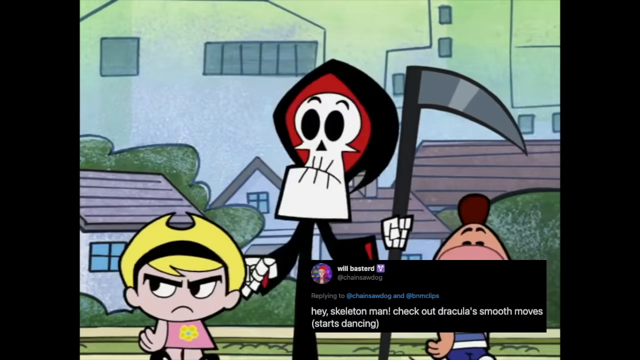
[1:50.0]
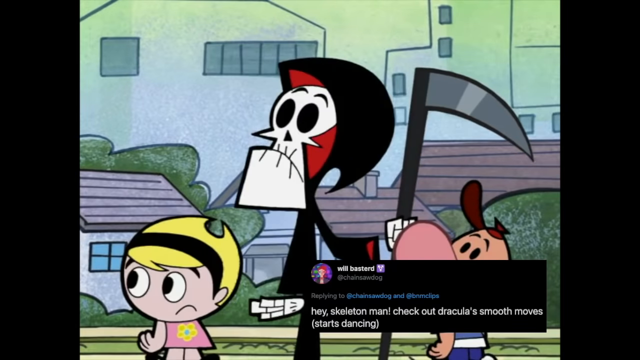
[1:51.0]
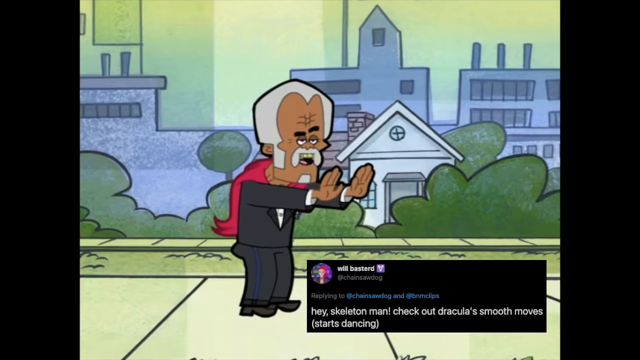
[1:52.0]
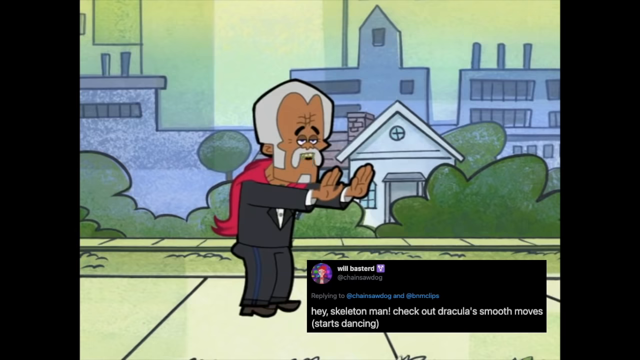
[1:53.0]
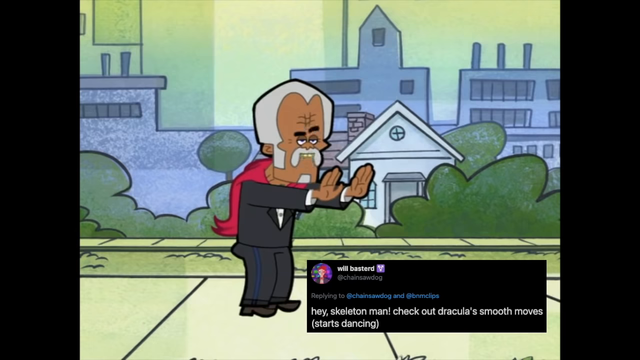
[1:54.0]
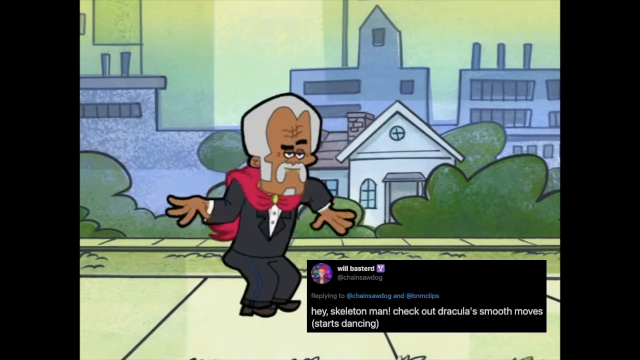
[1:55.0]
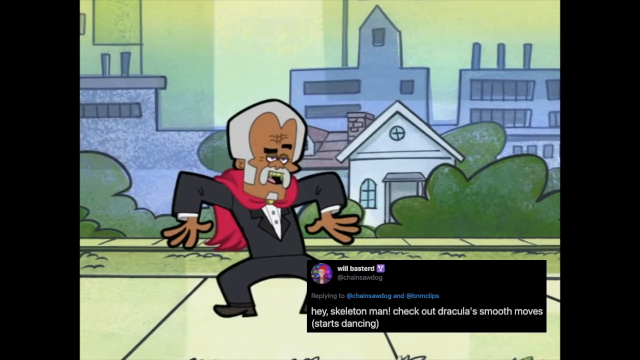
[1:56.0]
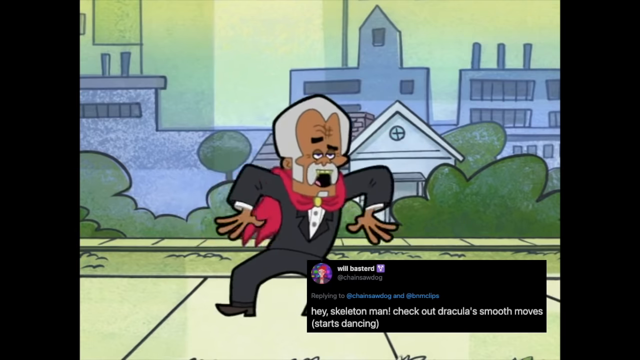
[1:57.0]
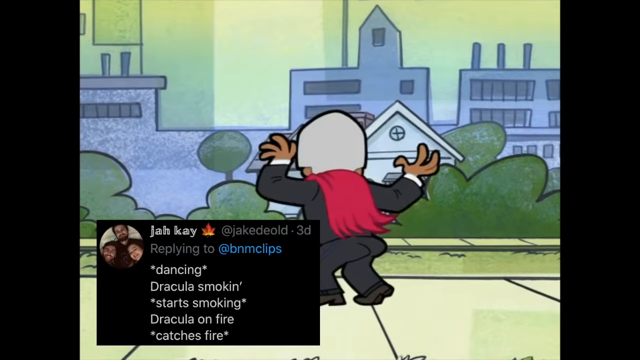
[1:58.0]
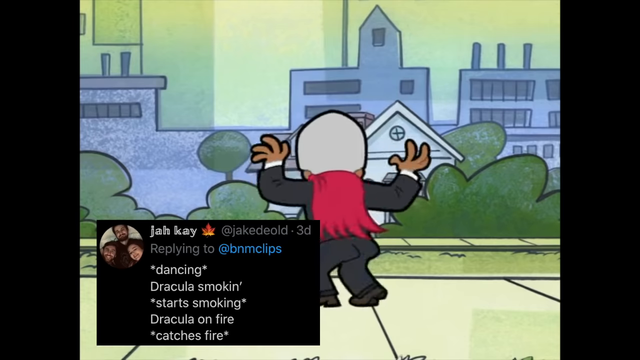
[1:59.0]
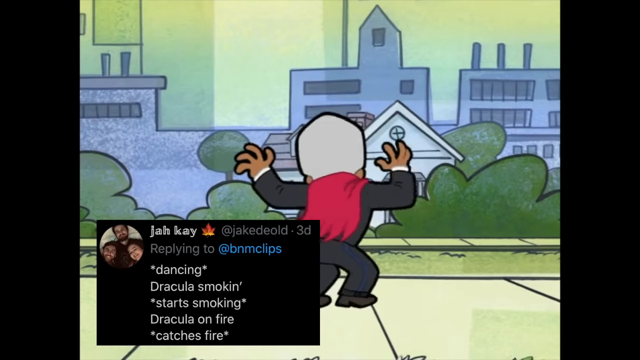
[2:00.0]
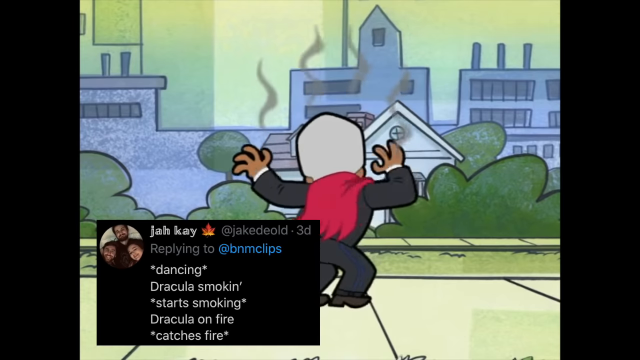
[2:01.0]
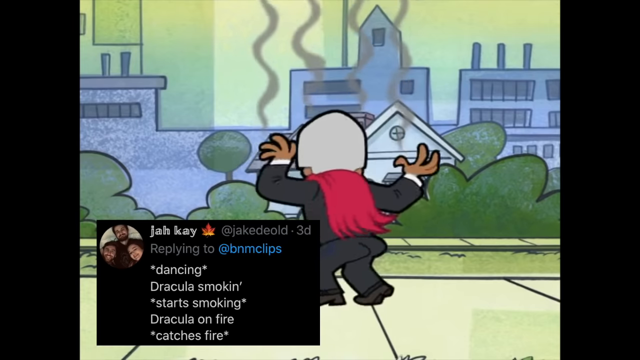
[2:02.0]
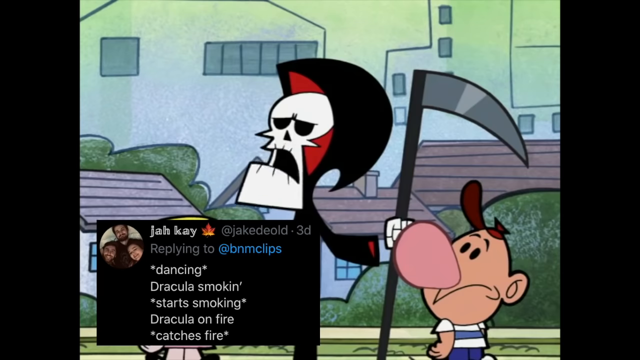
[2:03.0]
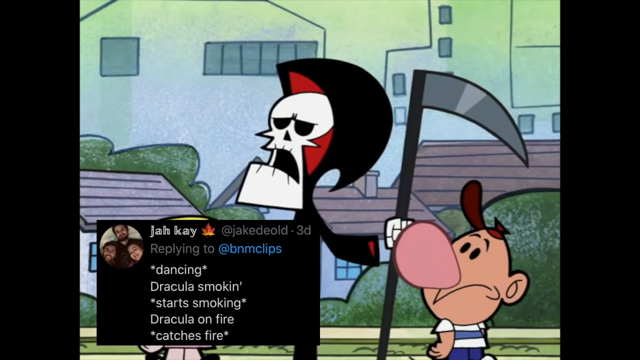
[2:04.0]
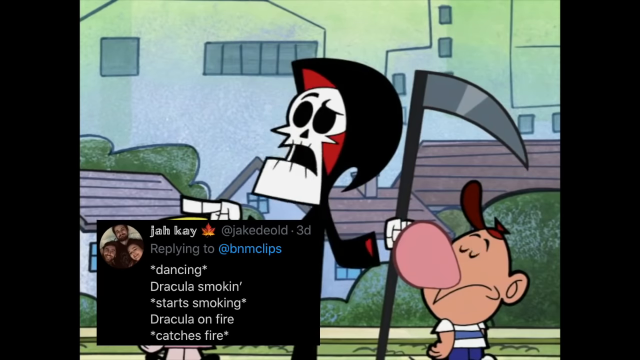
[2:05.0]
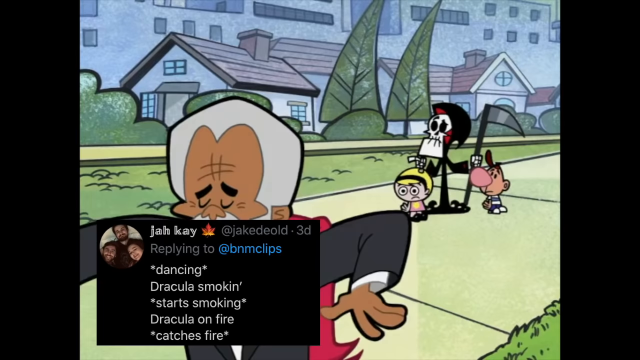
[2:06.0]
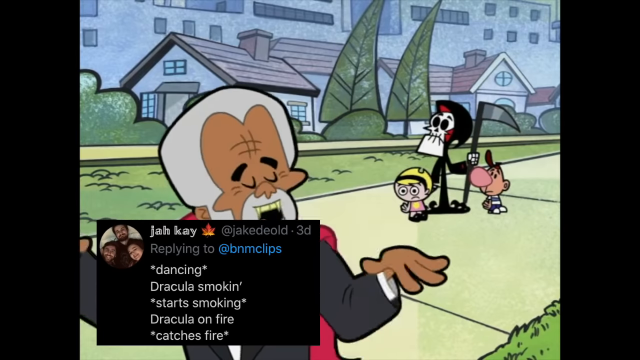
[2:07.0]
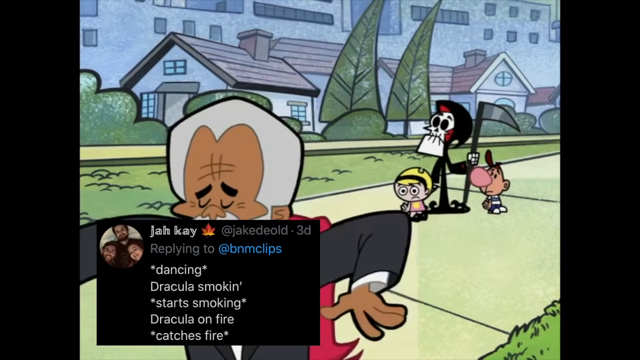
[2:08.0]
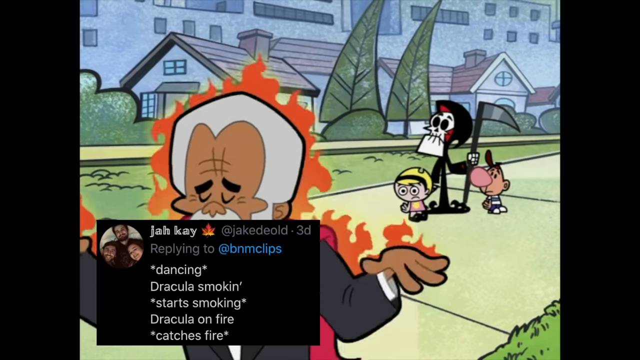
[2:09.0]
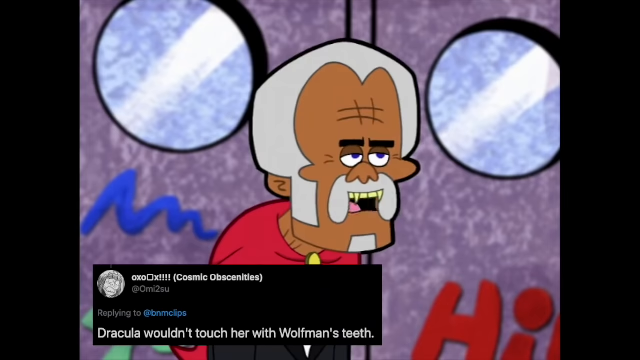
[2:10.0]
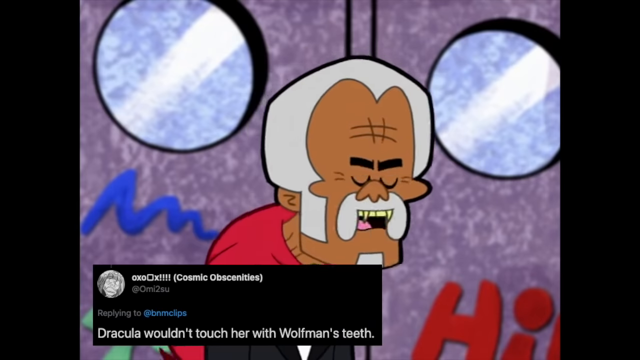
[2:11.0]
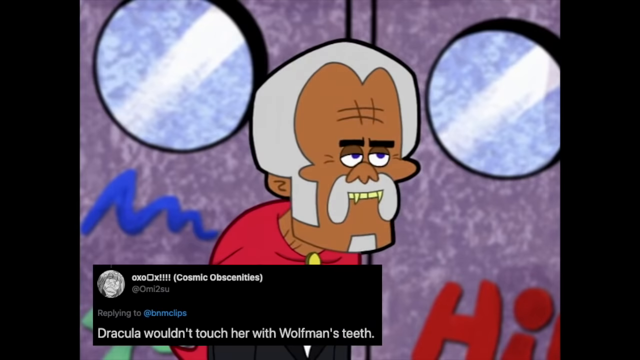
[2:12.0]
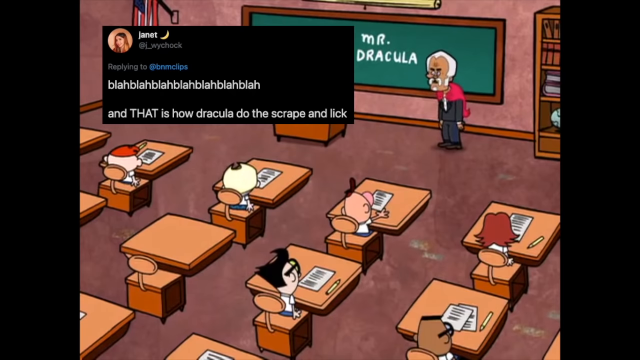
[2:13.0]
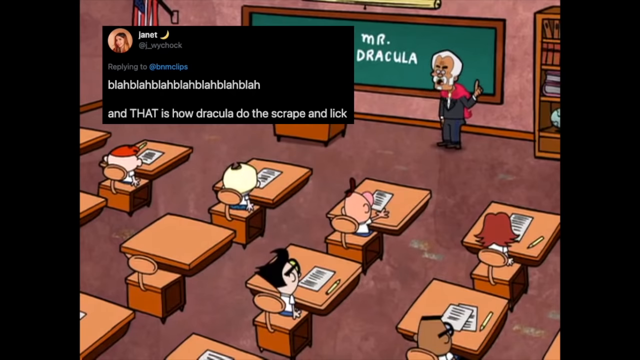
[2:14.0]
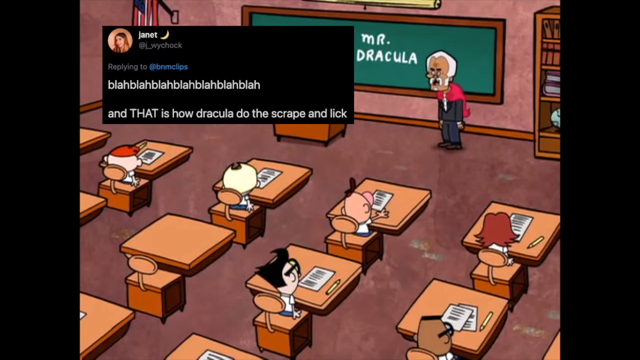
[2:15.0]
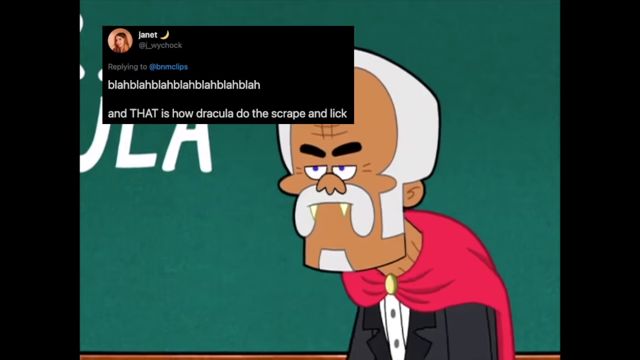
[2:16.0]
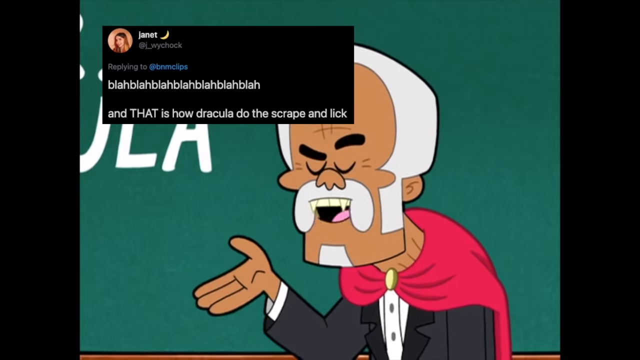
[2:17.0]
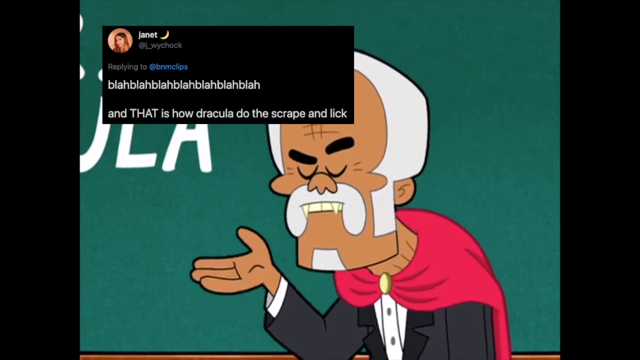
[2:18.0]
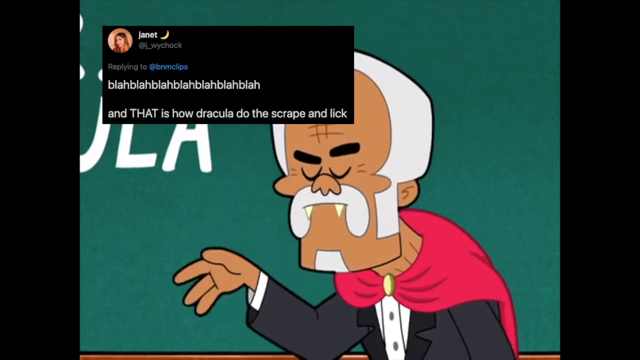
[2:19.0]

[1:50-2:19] An animated scene shows Death standing in the center: a skeleton Grim Reaper holding a sickle in his left hand and pointing with his right hand at a little blonde-haired kid beside him. The kid has a very angry look, with arms folded in a confrontational stance. They all look to their right, where a little figure with a big nose and a hat, to the right of Death, turns out to be Dracula. He comes up behind them, dancing around and shaking his booty, wearing a red vest. Suddenly smoke starts coming off him; Death says, "hey man, you're smoking," and Dracula says, "yeah, I can really move, can't I?" He is actually in the sun and about to burst into flames. The scene changes, and he is back in the classroom talking to the kids.